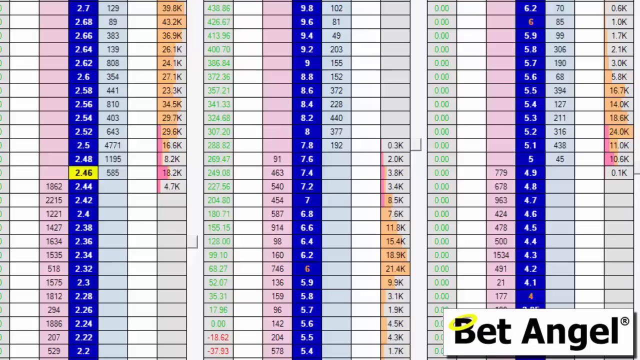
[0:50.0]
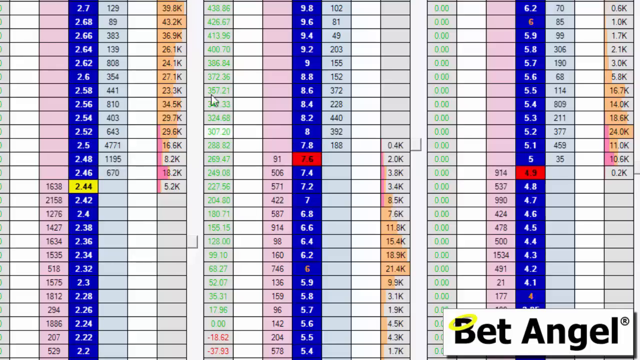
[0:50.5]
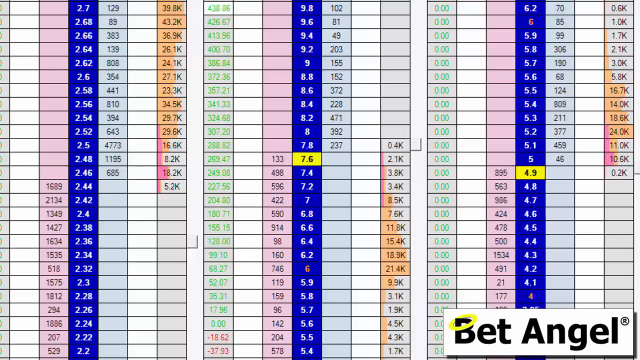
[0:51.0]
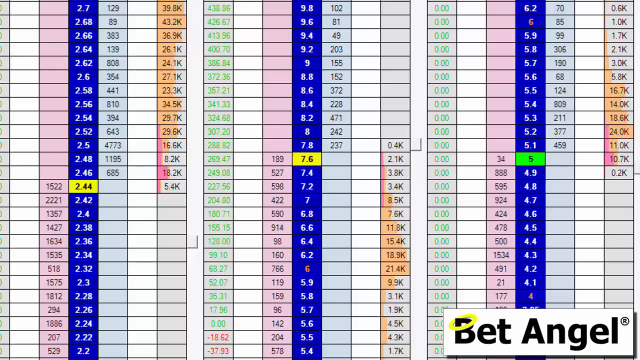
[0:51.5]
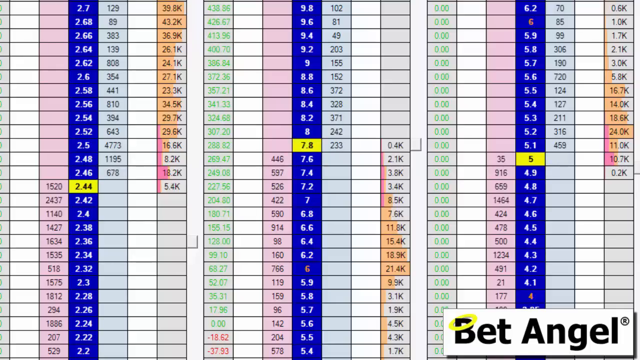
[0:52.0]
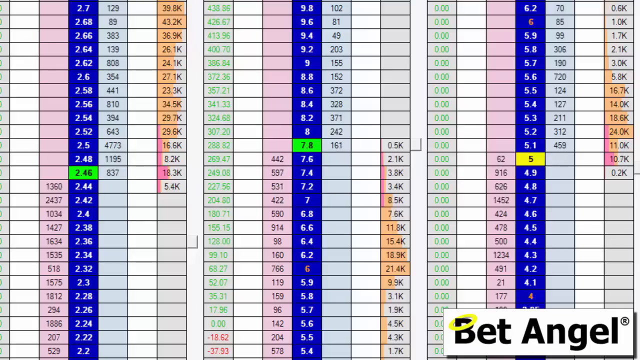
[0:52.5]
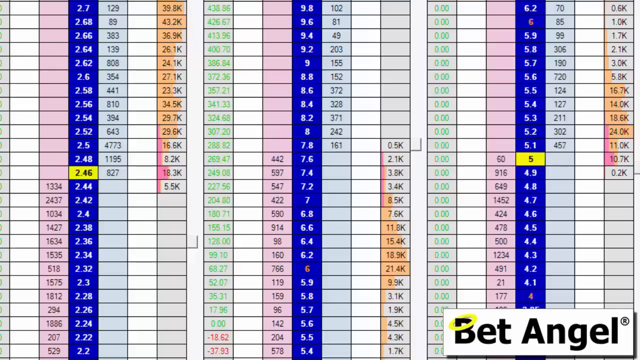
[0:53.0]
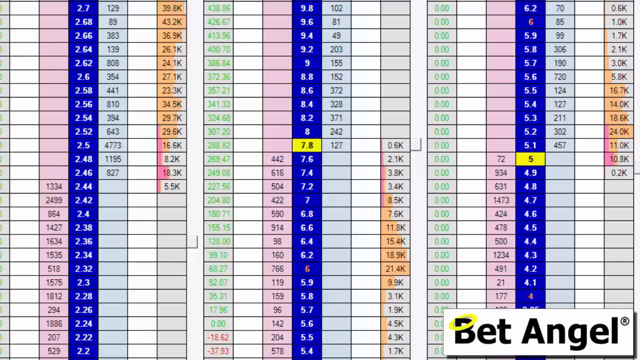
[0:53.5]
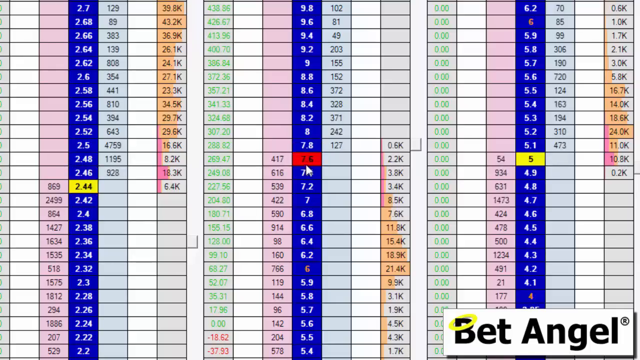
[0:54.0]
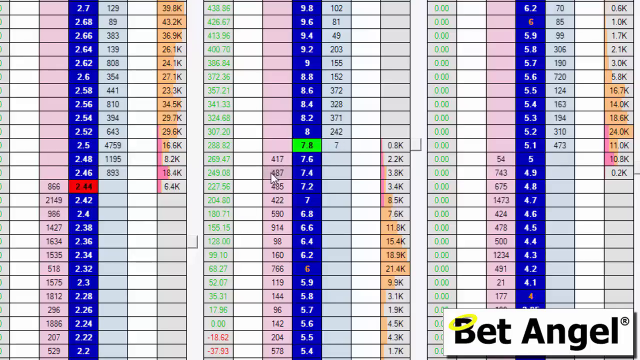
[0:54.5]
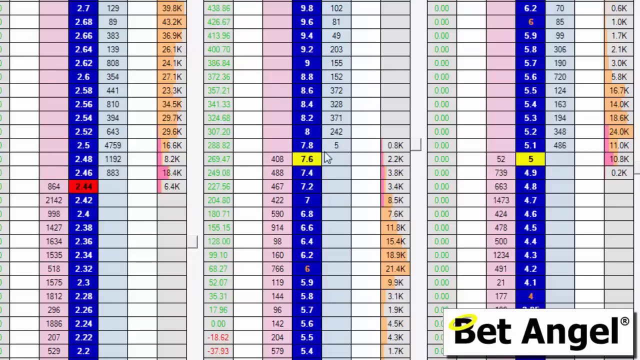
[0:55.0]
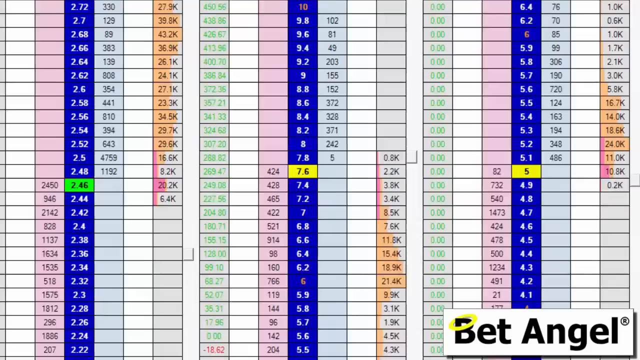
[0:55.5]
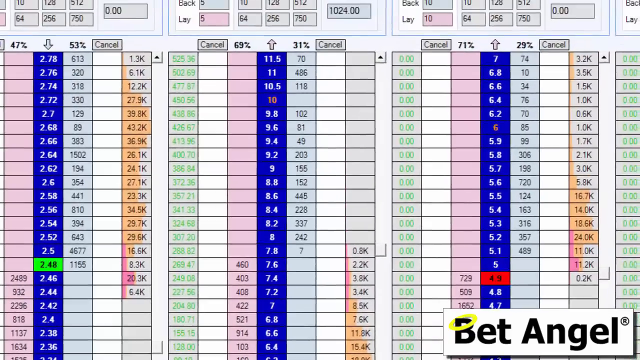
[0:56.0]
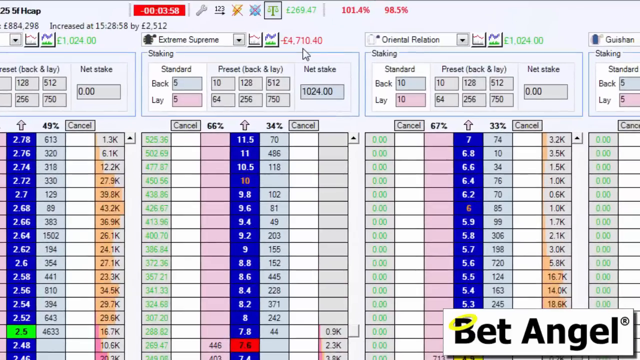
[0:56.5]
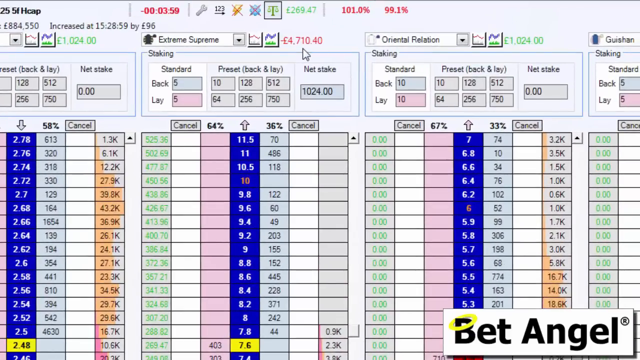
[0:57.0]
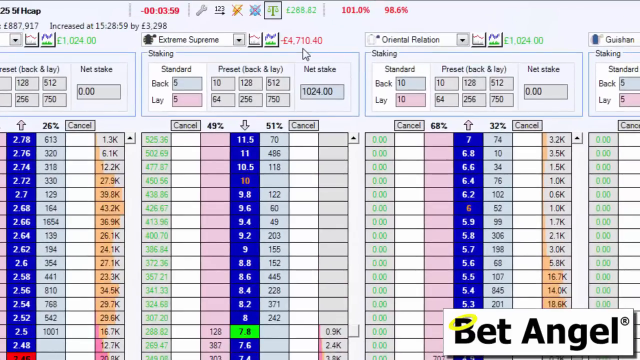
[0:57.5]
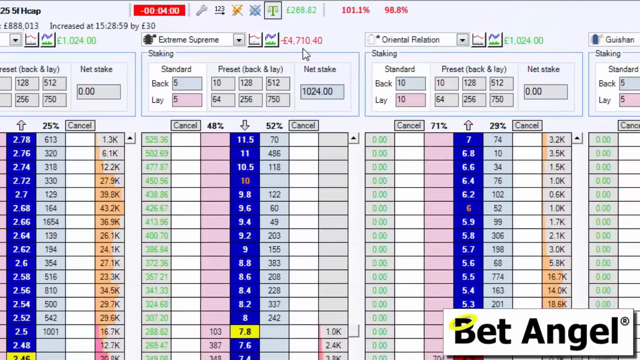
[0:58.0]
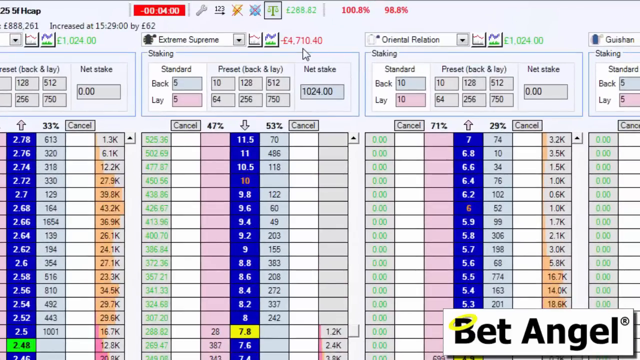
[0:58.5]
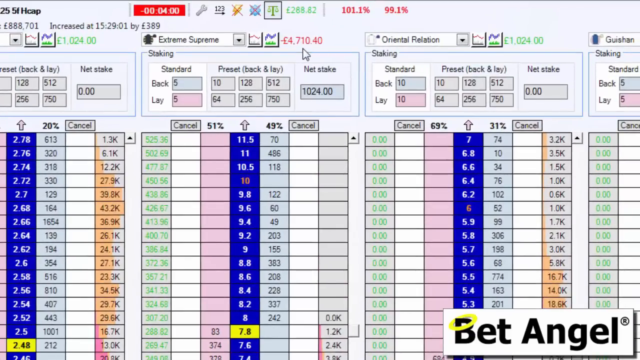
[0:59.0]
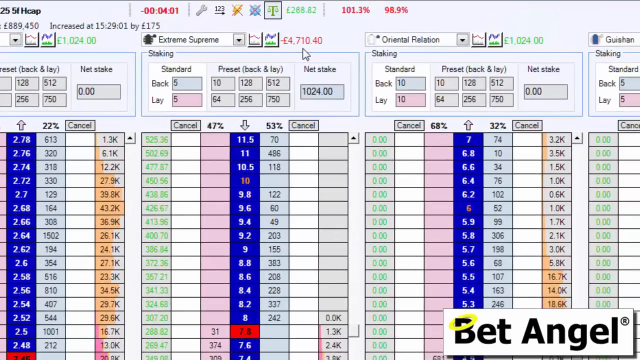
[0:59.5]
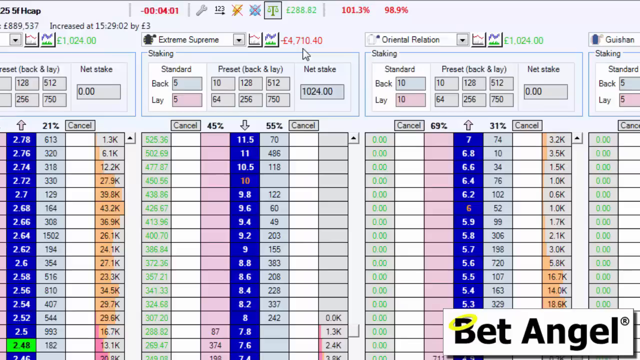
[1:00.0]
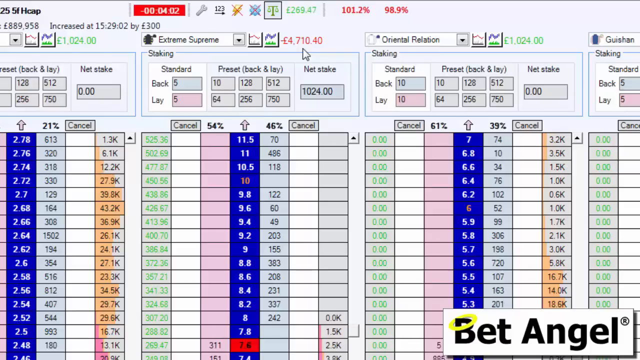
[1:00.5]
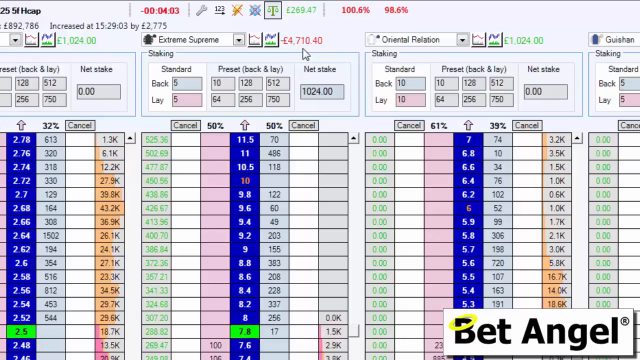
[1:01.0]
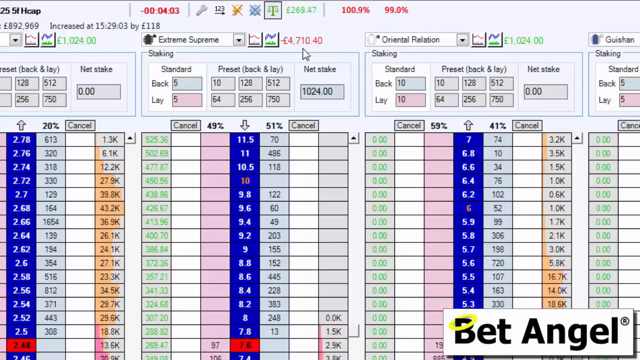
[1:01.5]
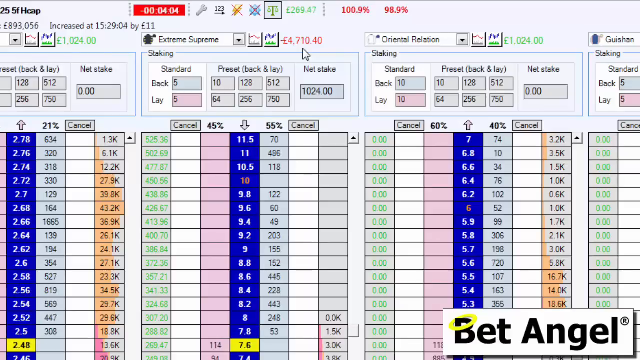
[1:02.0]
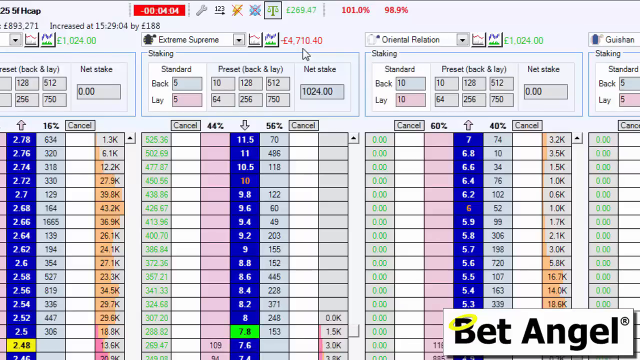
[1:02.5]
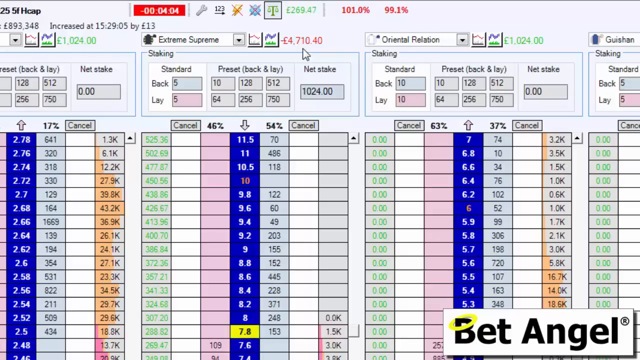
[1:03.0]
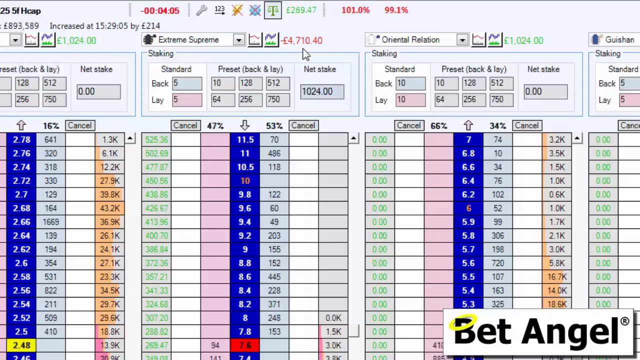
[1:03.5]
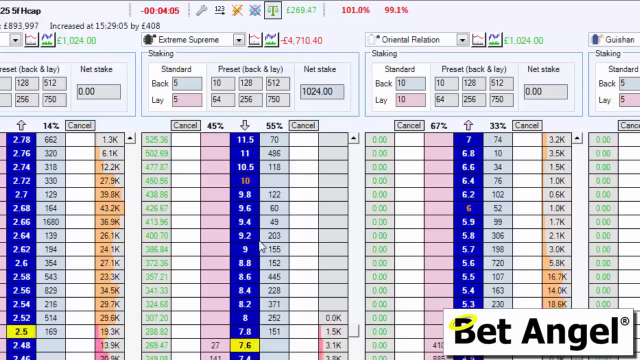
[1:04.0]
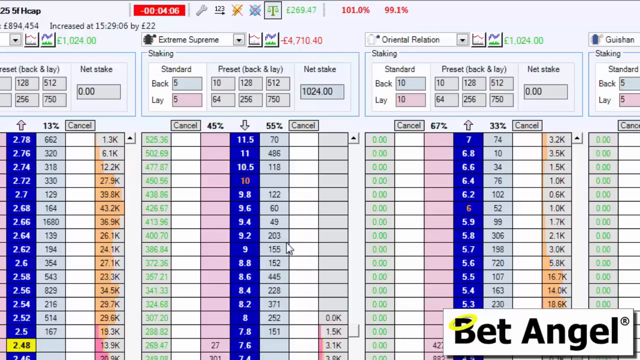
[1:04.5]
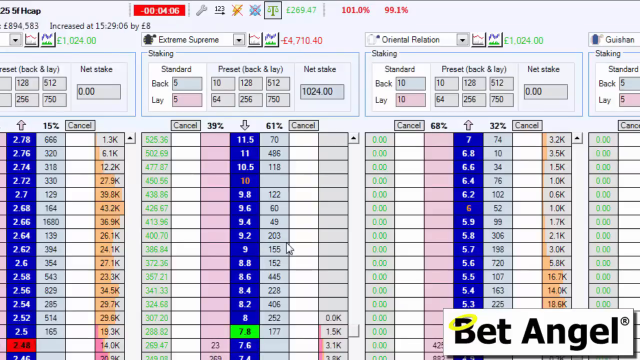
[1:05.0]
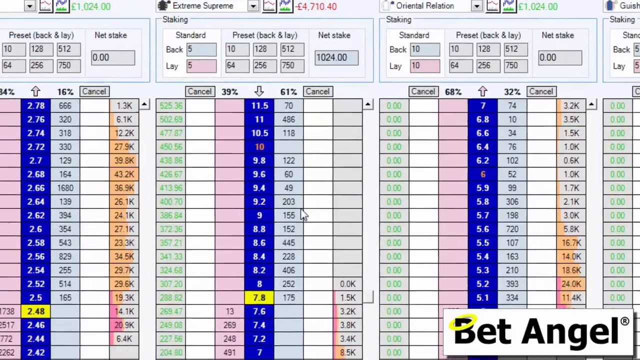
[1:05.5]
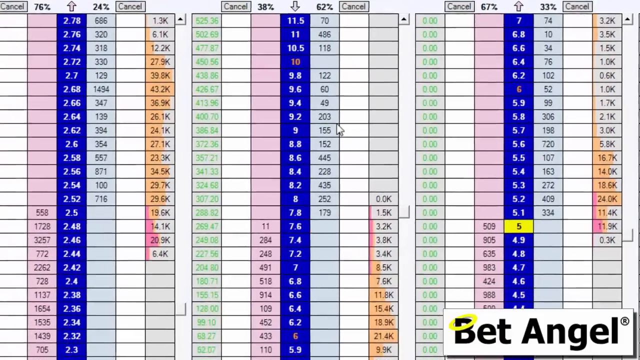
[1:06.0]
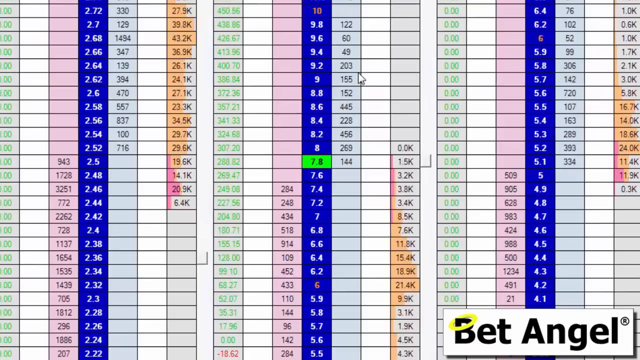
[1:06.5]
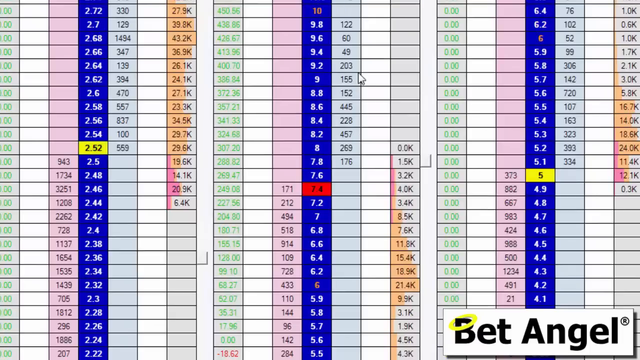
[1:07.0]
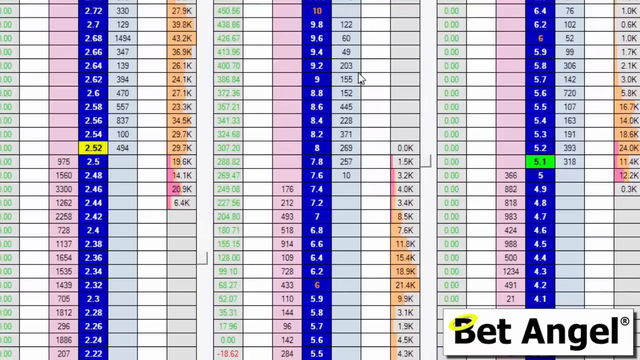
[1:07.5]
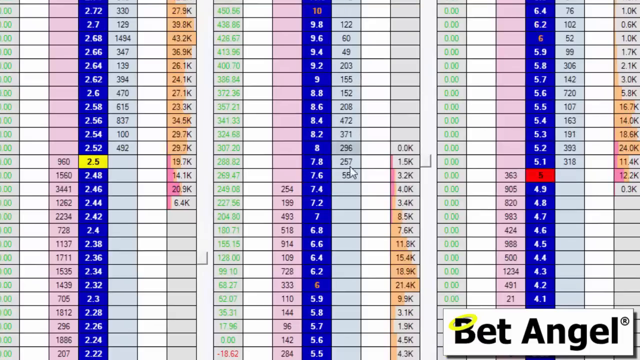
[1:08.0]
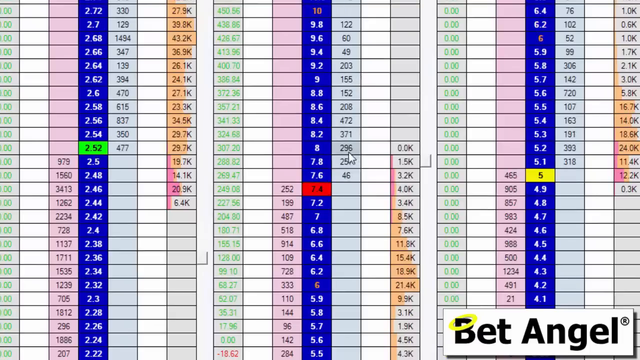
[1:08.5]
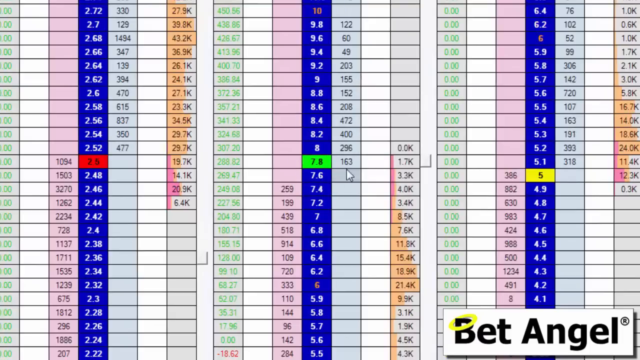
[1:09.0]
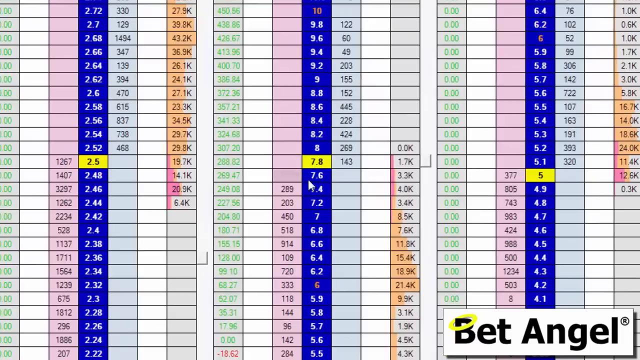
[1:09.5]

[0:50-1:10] The video zooms in on a section of a graph. "Bet Angel" appears in a box in the lower right-hand corner, with a yellow halo over the B. Someone is working a cursor, which circles around the midsection in the blue, first around 7.8 and then dropping to around 7.4. The cursor moves very fast, going up and down the page, while the numbers change and the blue columns turn from red to yellow to green very quickly. These numbers are not labeled. A gray section is shaded in orange, and the orange gets wider in certain sections and narrower in others. With the orange is a little pink section that stays narrow and then gets wider in some boxes.